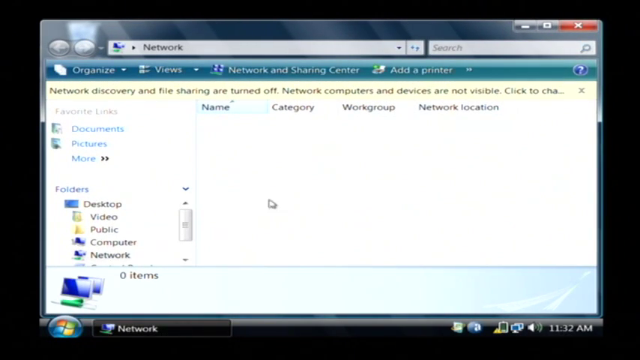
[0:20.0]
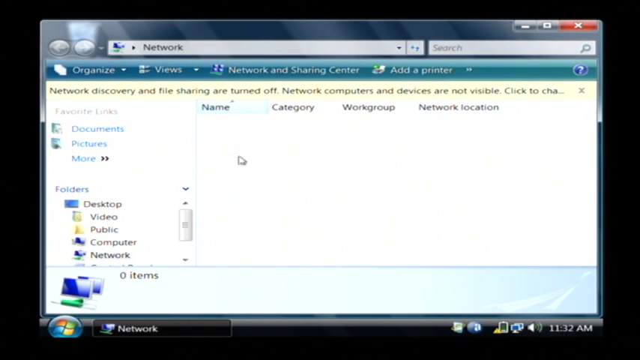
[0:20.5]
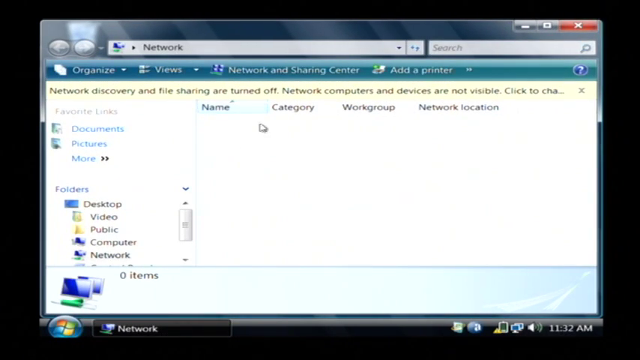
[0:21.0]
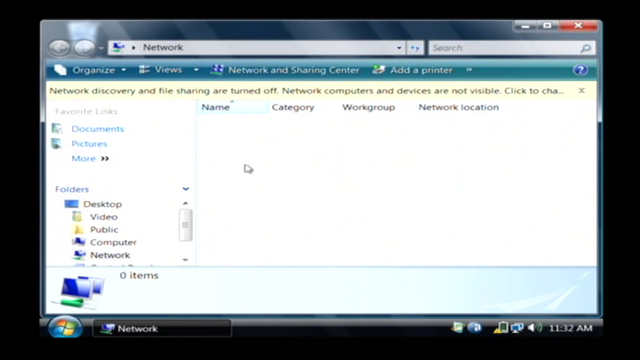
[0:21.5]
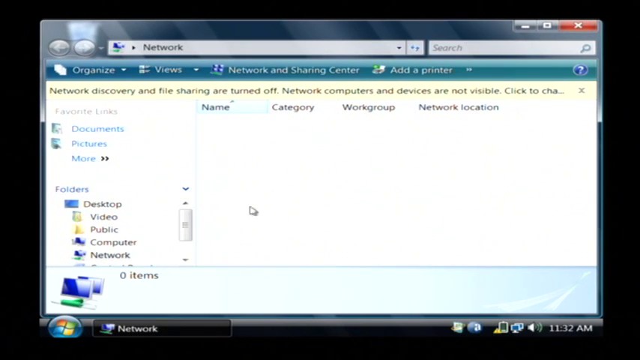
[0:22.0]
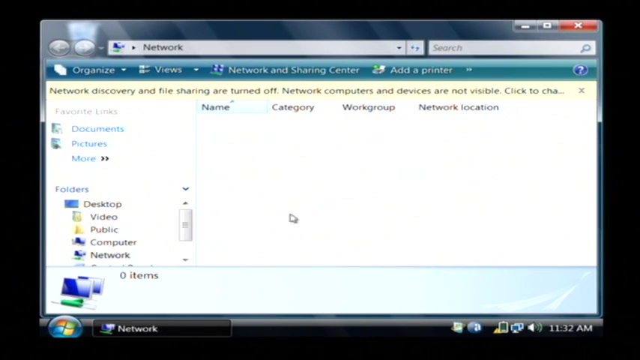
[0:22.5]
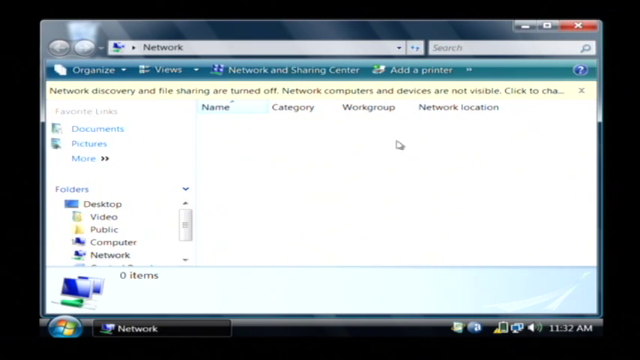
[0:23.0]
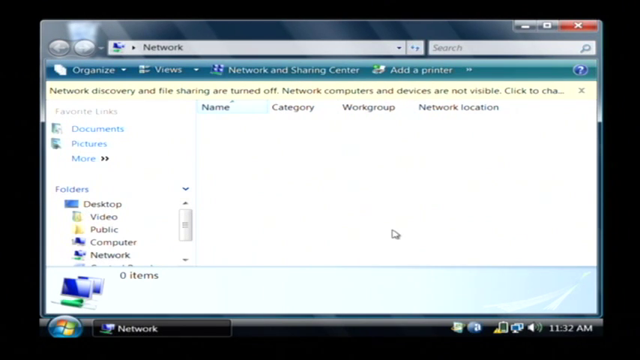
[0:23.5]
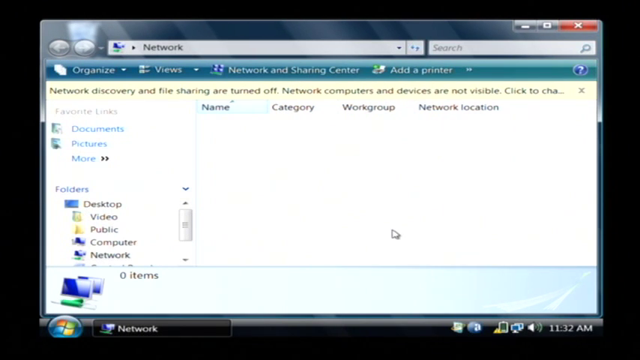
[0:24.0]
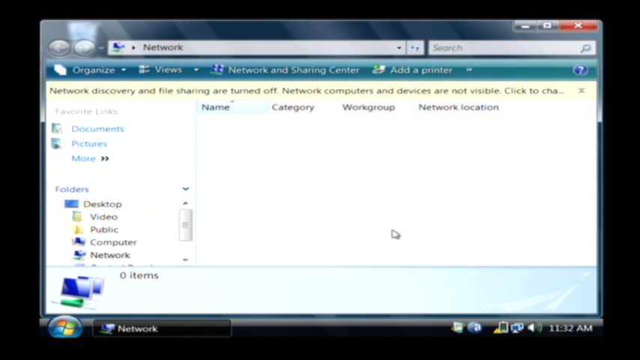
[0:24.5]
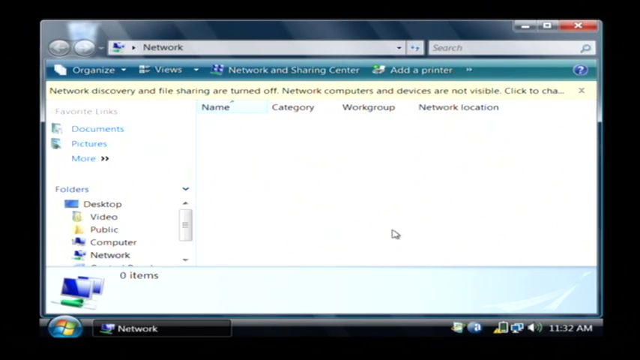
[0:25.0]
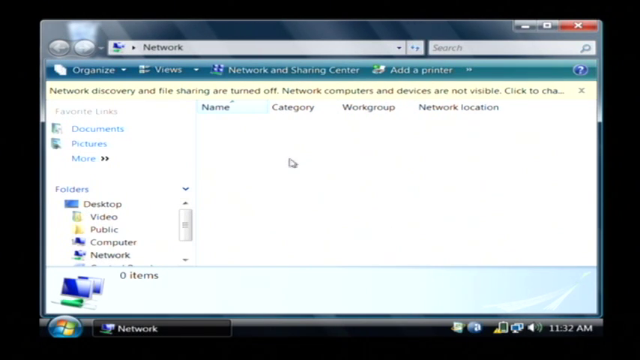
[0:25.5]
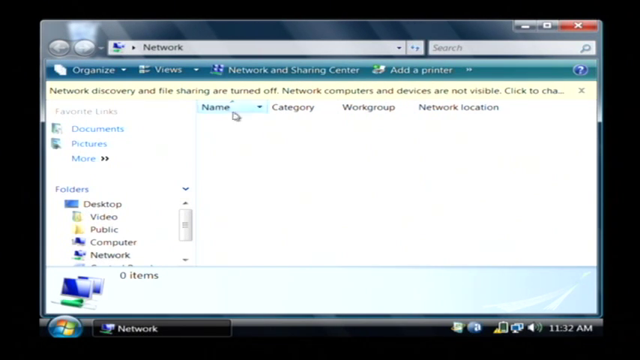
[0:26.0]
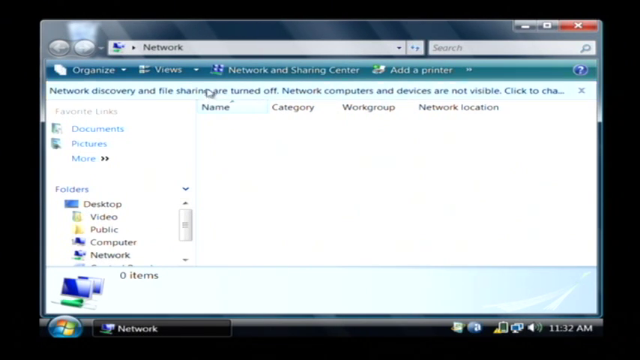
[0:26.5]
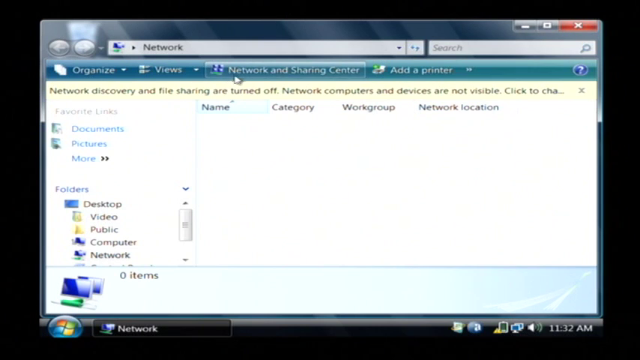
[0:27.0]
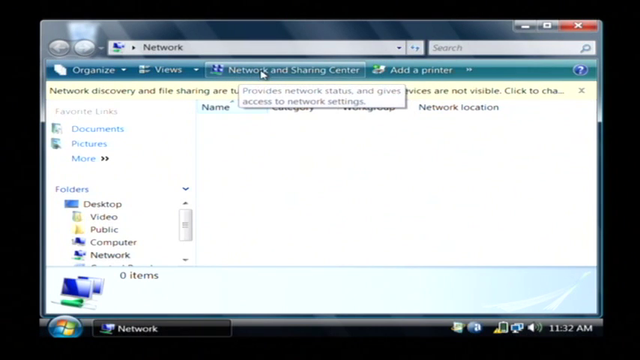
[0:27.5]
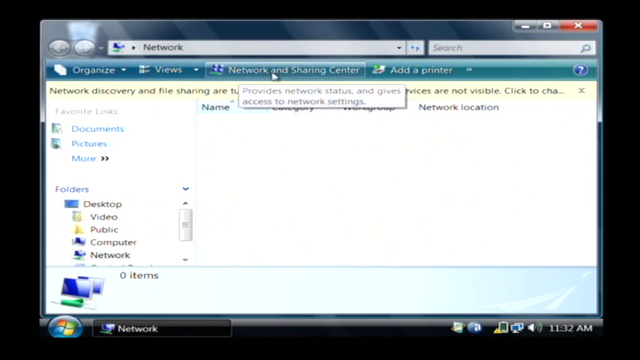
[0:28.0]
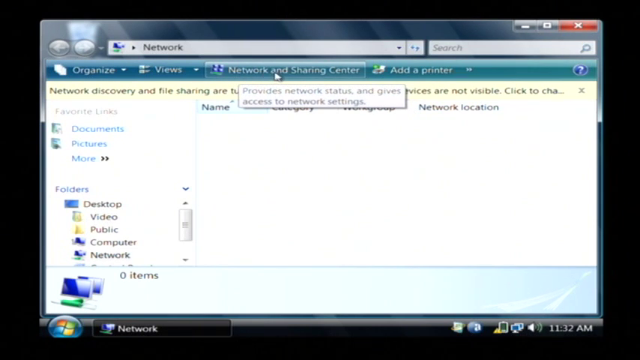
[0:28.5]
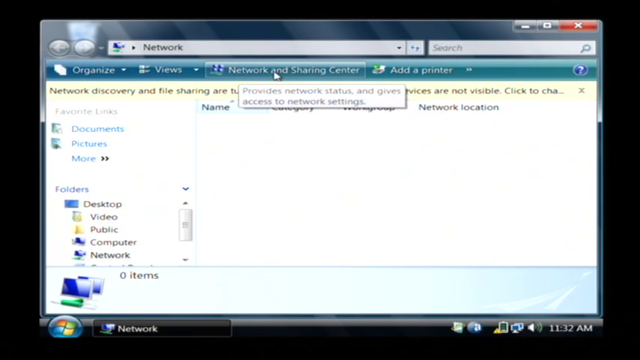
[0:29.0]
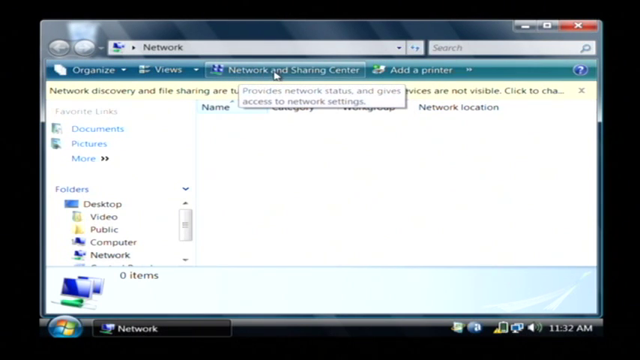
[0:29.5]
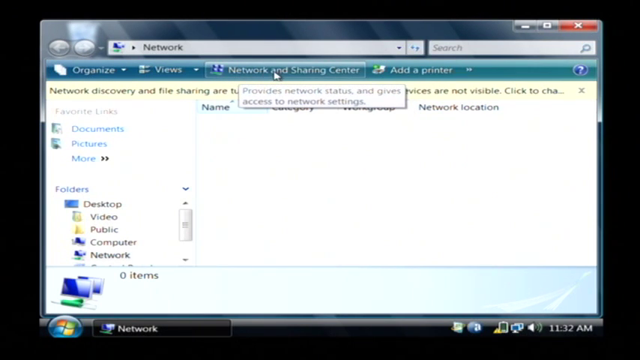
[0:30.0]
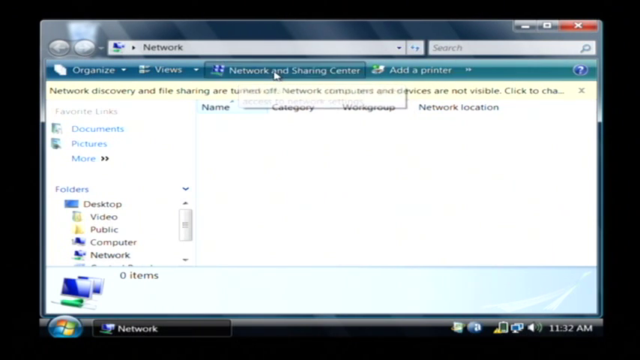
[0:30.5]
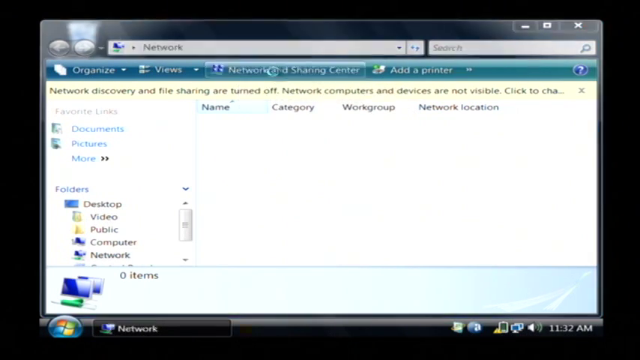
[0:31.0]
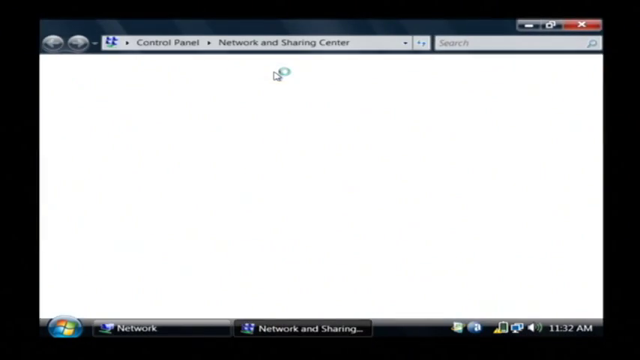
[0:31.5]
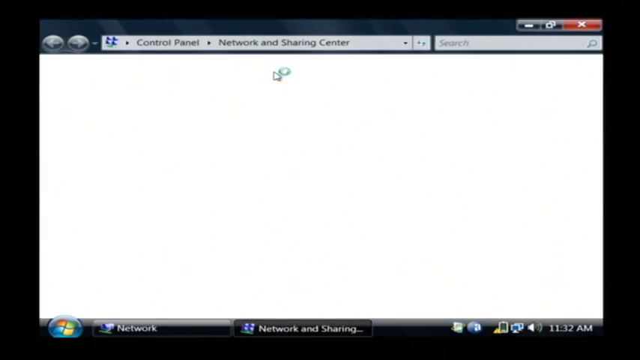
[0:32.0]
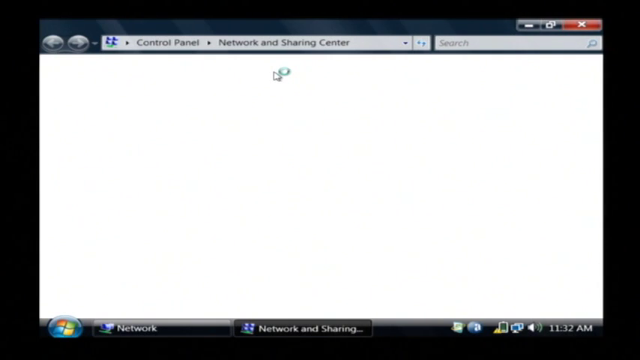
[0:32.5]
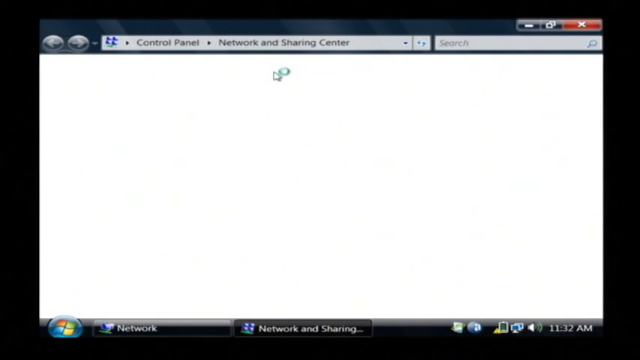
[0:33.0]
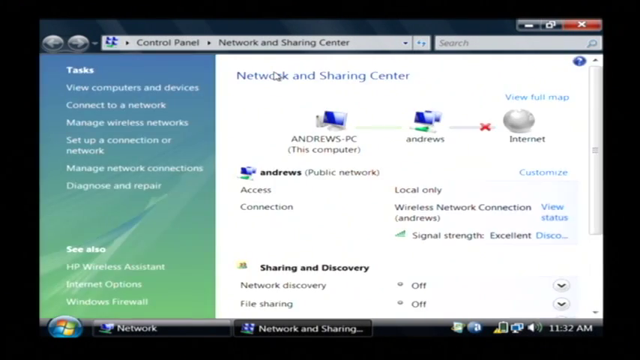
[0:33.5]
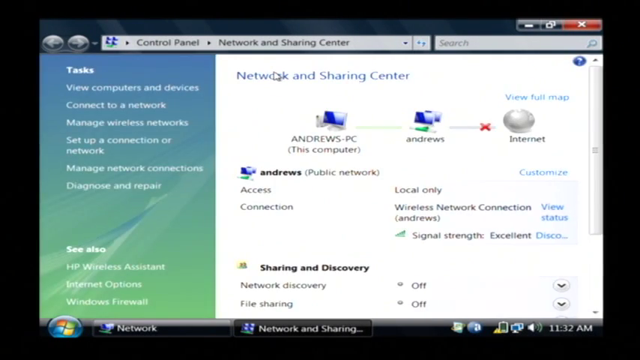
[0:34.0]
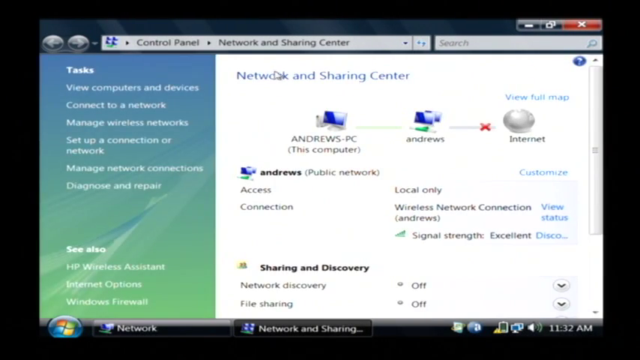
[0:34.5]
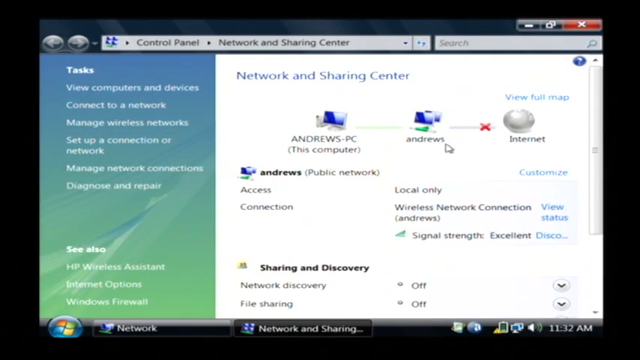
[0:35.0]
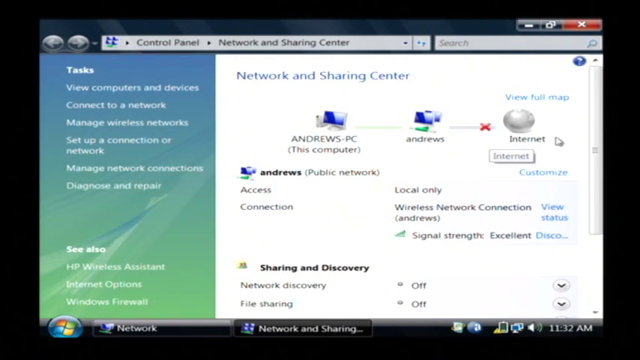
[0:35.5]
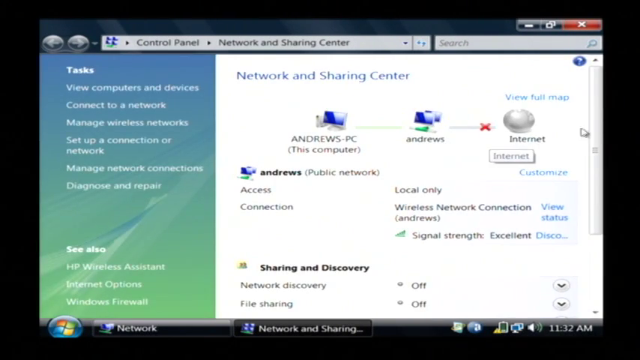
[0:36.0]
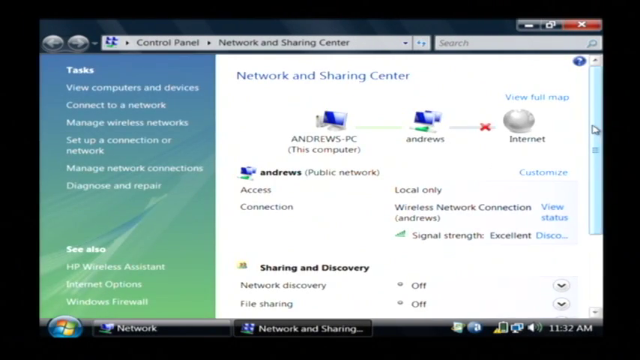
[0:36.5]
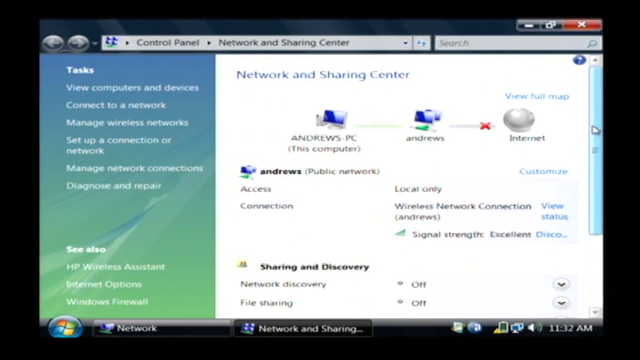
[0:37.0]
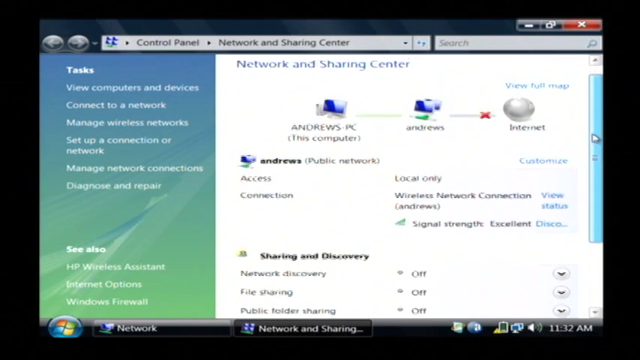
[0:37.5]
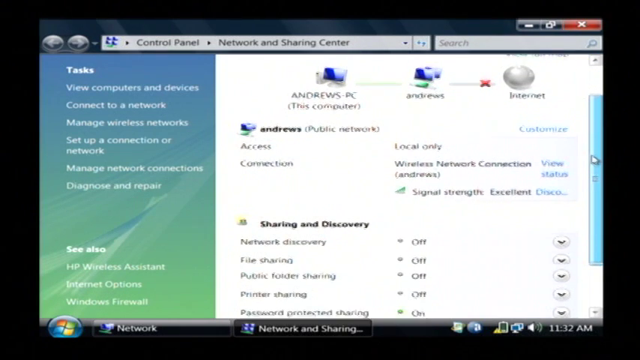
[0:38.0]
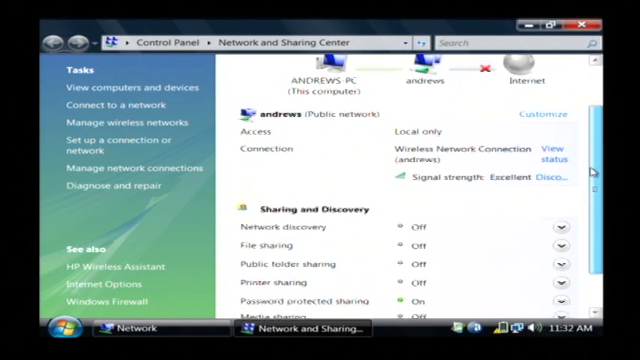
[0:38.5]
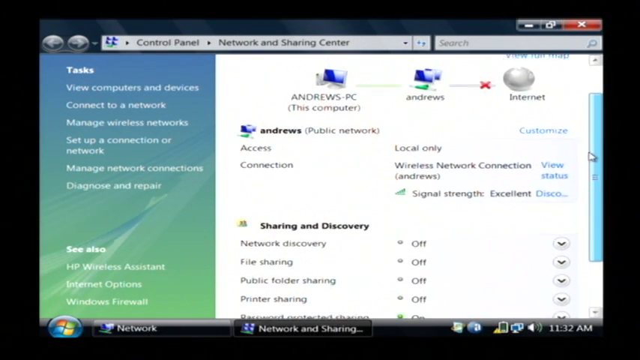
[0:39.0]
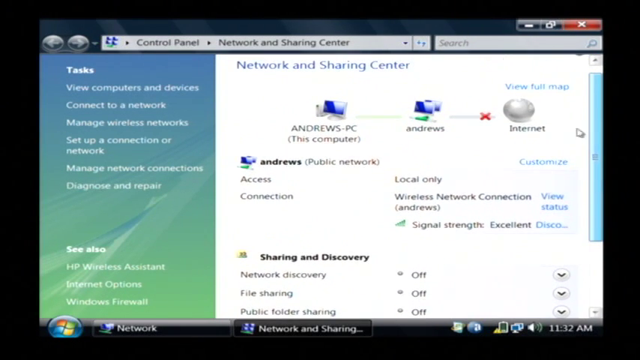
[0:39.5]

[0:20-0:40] A computer program window is on the screen over a black background. Its top bar is silver, with a selection window that reads "Network", and closer to the right side of the top it reads "Search". Below that it reads "Organize", "Views", "Network and Sharing Center" and "Add a printer", with a question mark icon at the end. The next row reads "Network Discovery and File Sharing are turned off. Network Computers and Devices are not visible. Click to check..." followed by an X. Below that is a file section area. On the left-hand side it reads "Favorite Links", then "Documents", "Pictures", "More" with arrows, then "Folders", "Desktop", "Video", "Public", "Computer" and "Network". Across the top of the broader segment of the window it reads "Name", "Category", "Workgroup", "Network Location". The bottom bar has two computer monitors and reads "zero items". The mouse scrolls, clicks on Name, and waves around as if there should be something filling the space. It then points out Network and Sharing Center and clicks on it, and the window changes. The top of the window now reads "Control Panel, Network and Sharing Center", and the mouse remains over the white blank region below that bar. The screen changes to show a colorful blue and green segment on the left-hand side and the sharing center on the right-hand side. The mouse moves and scrolls, making the white network and sharing center segment move up and down.